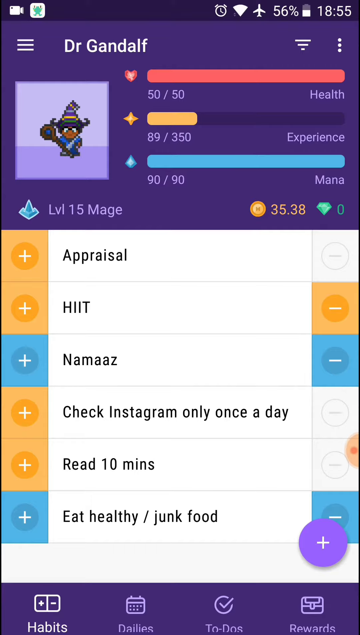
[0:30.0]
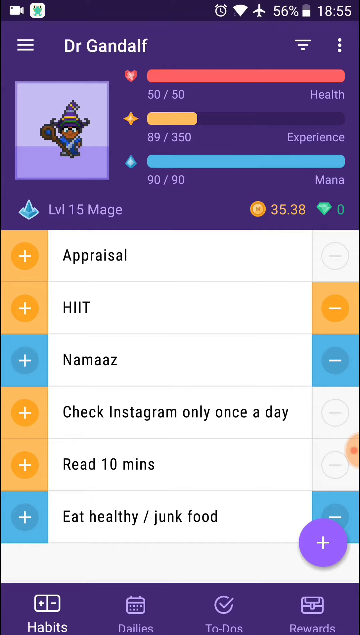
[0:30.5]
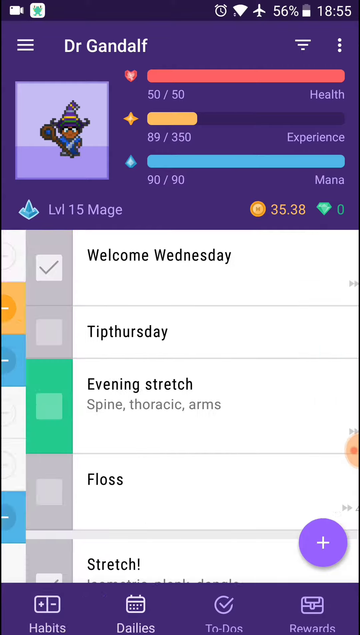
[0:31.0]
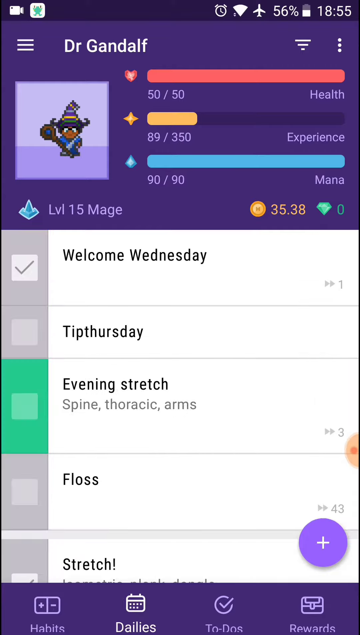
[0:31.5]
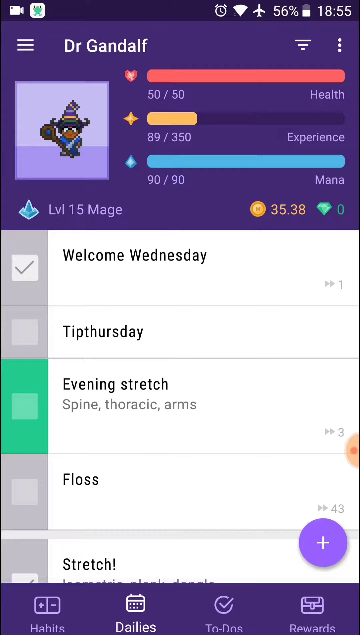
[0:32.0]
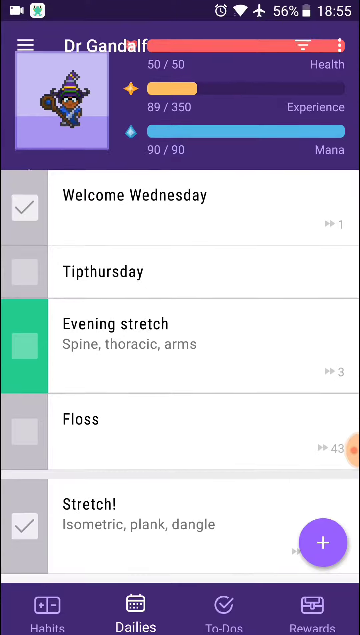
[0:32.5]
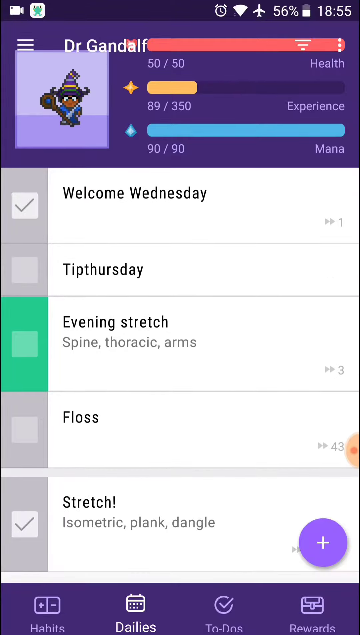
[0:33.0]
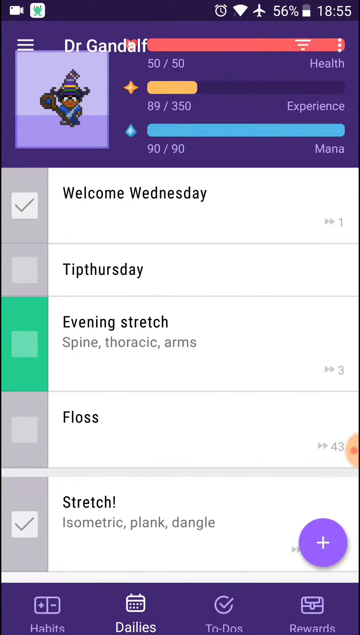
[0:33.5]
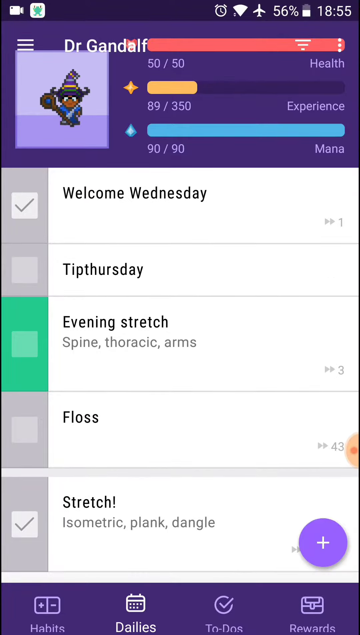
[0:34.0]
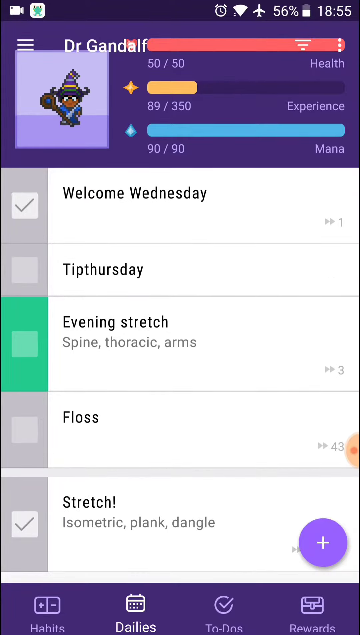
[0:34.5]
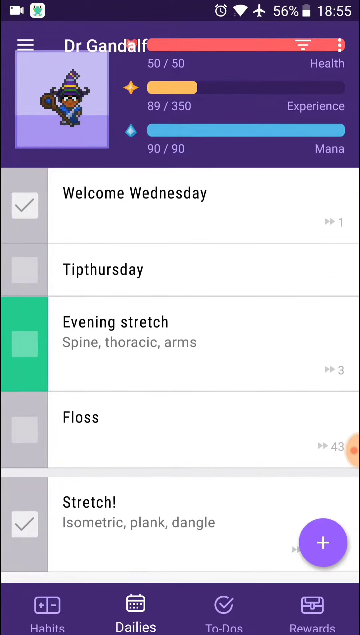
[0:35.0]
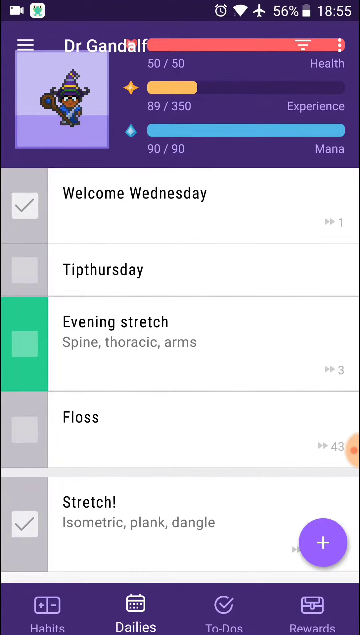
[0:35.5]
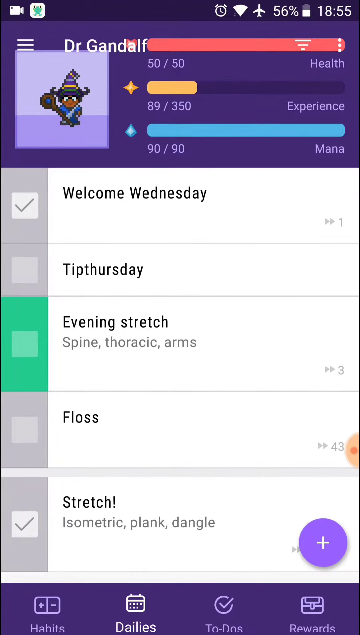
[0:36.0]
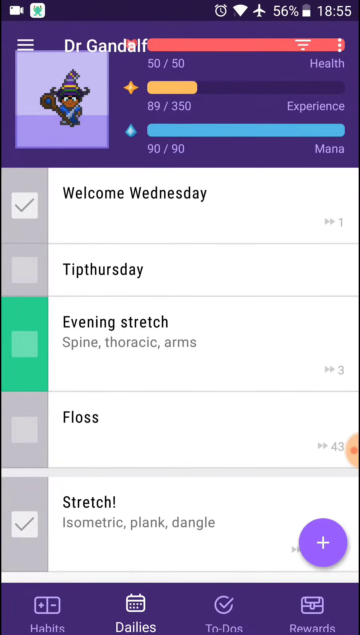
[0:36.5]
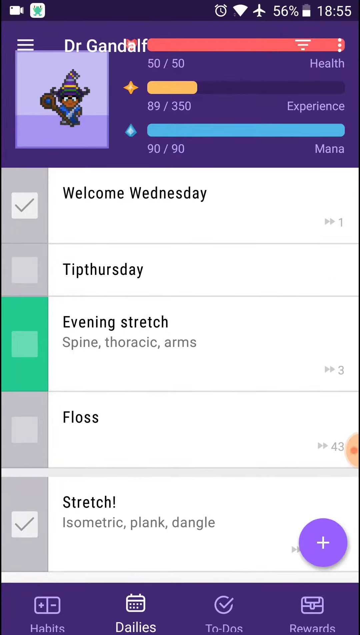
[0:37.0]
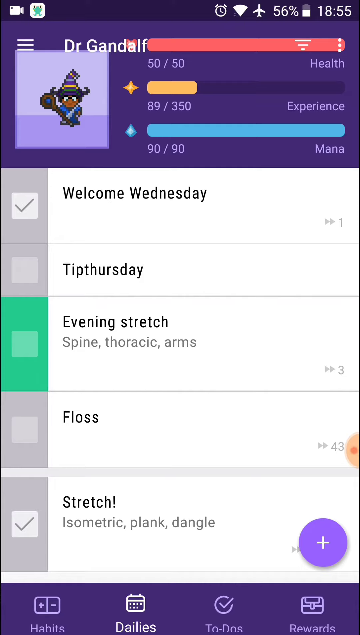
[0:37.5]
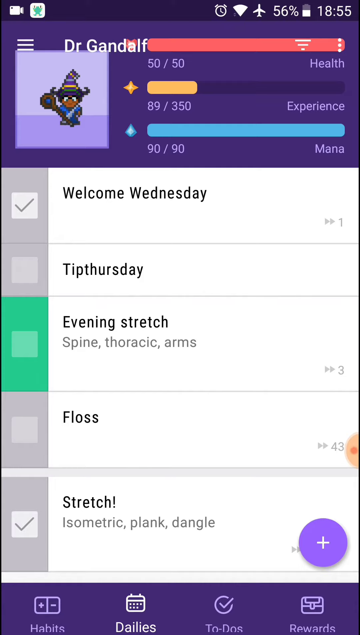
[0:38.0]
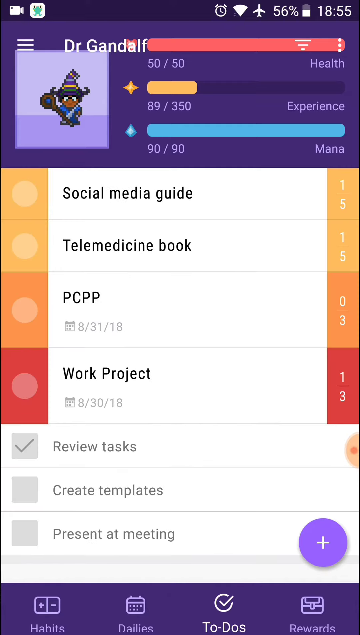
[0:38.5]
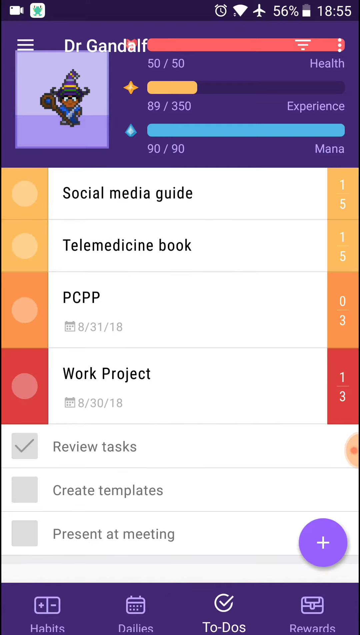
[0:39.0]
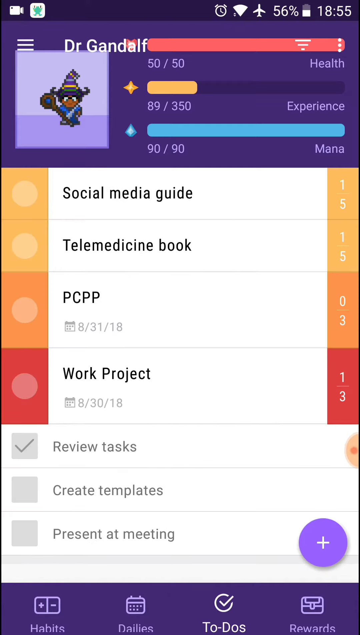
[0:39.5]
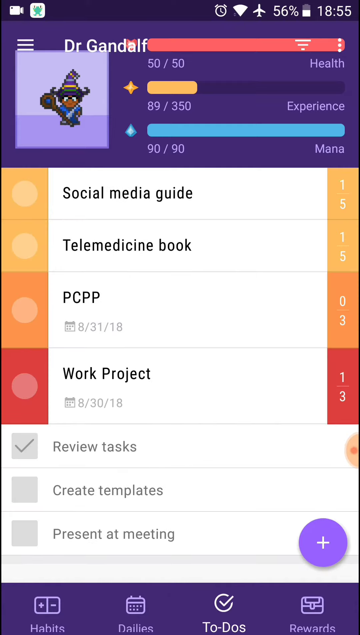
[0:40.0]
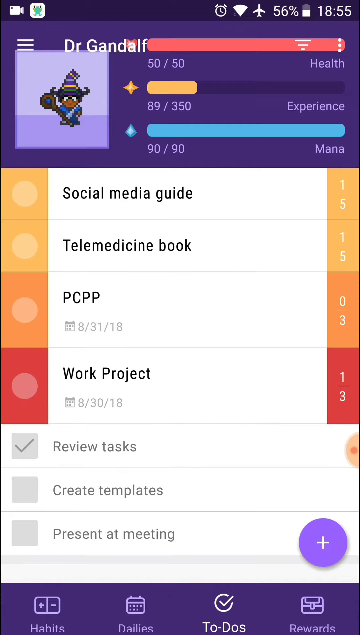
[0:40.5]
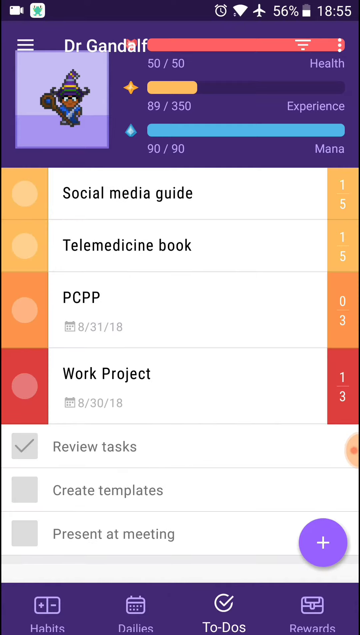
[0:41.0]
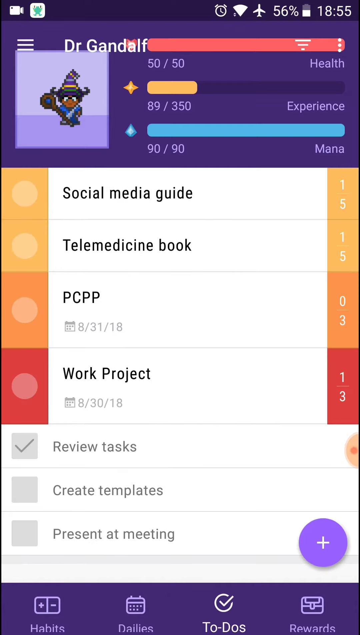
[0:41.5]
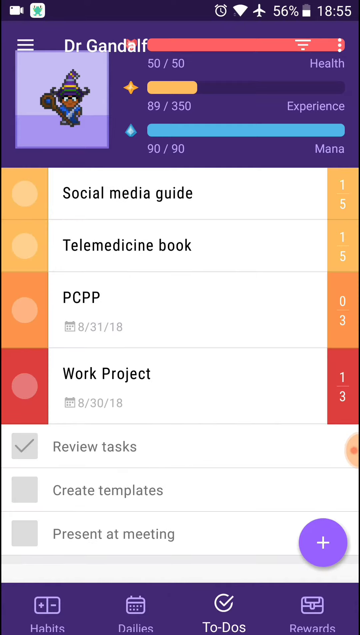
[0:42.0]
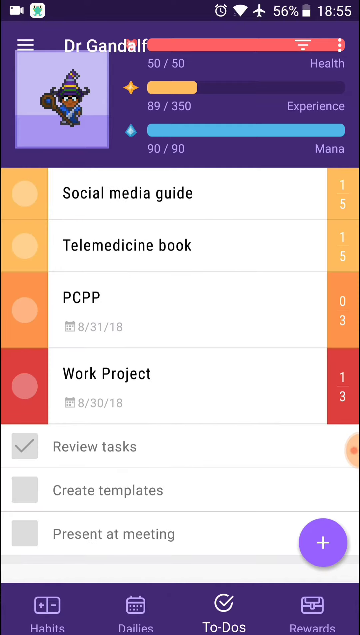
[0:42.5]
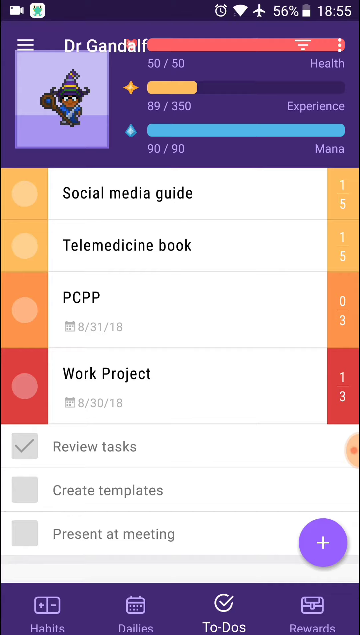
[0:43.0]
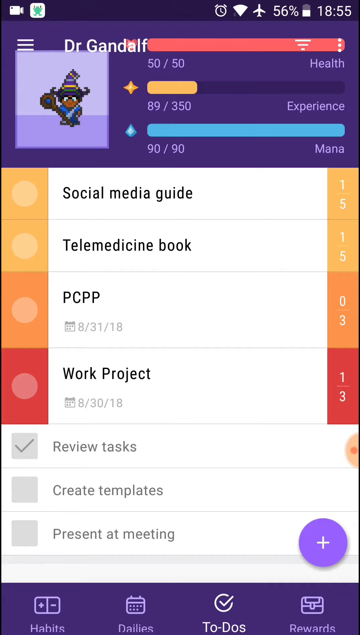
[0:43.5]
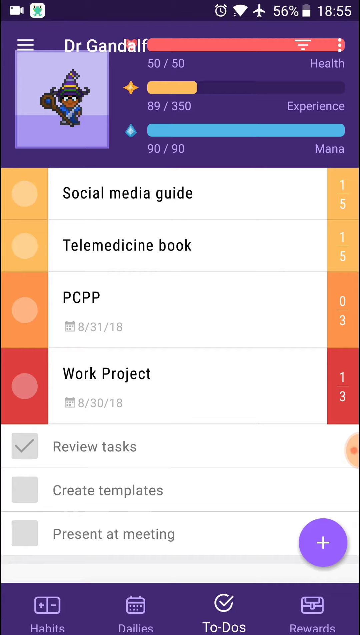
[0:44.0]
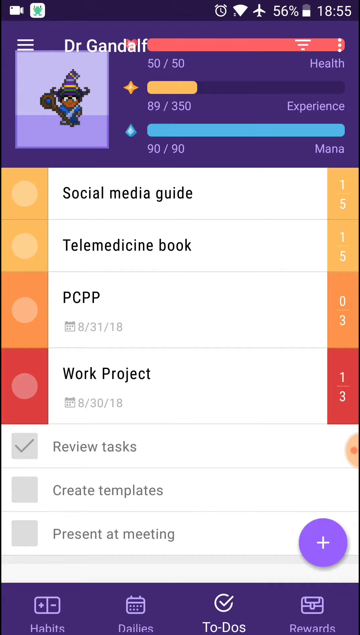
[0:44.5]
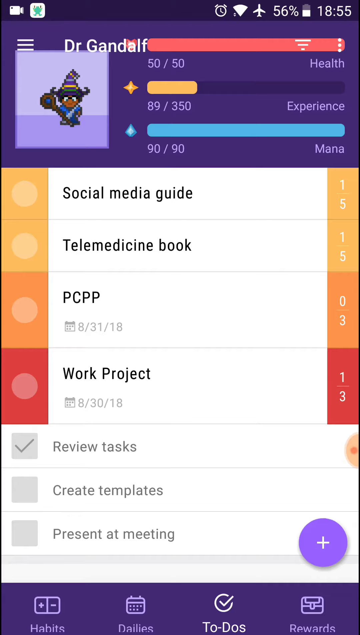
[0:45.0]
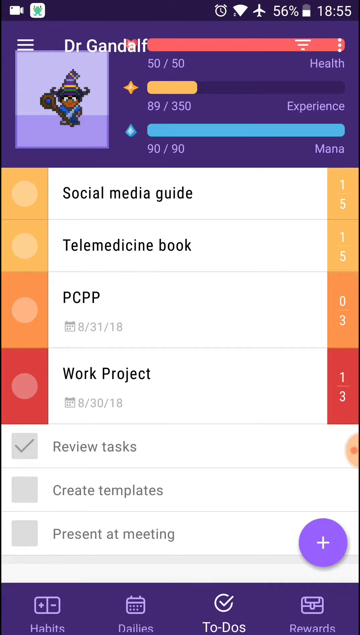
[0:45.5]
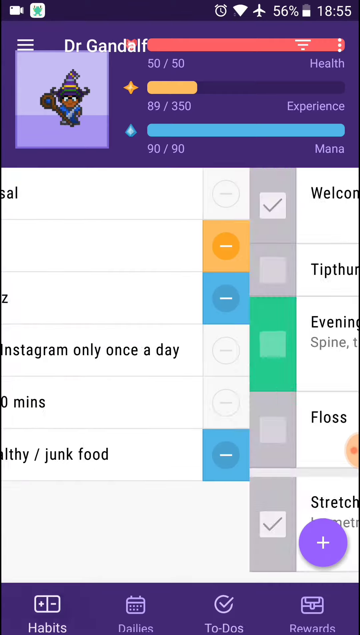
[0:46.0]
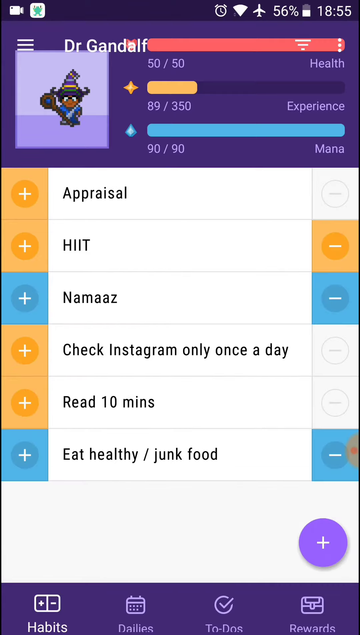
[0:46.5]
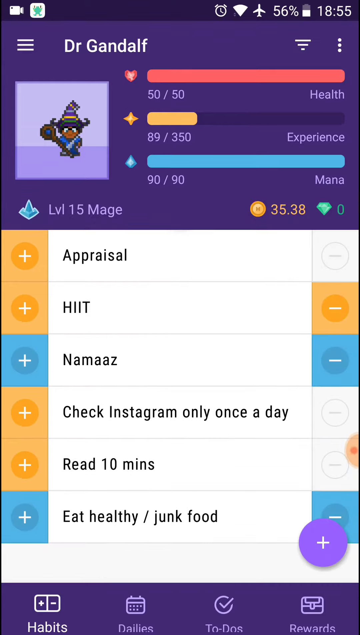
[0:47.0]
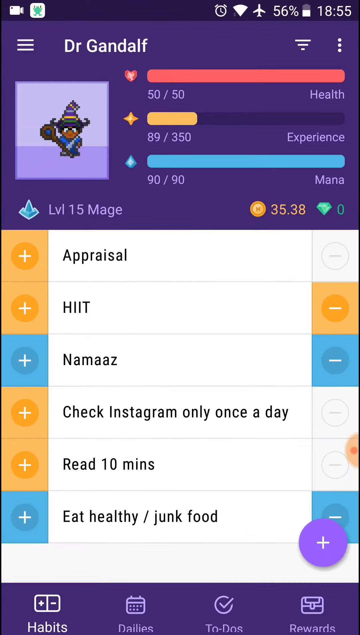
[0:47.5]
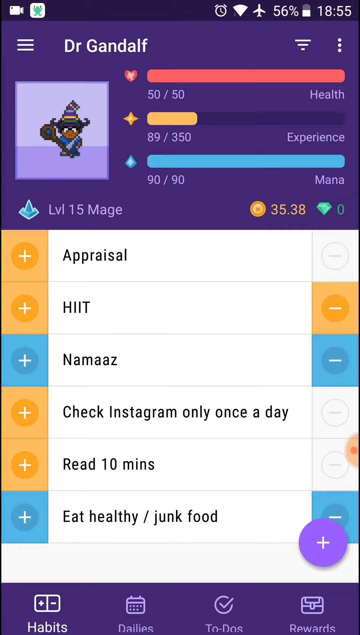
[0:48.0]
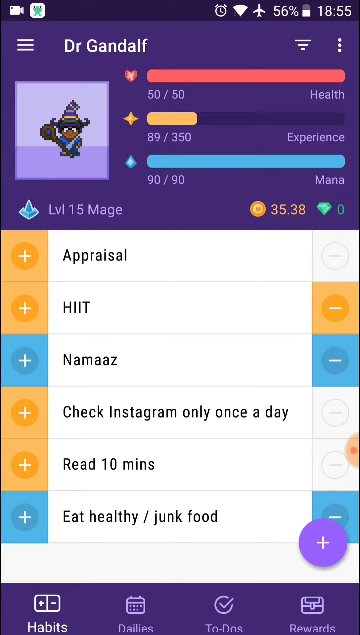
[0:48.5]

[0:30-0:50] The list at the bottom changes as the user scrolls through it, showing five items. From the top they read "Welcome Wednesday", "Tip Thursday", "Evening Stretch" in the center, "Floss" toward the bottom, and "Stretch" at the very bottom. Another list on top reads "Social Media Guide", then "Telemedicine Book", "PCPP" and "Work Project". There are three check marks at the bottom, one of them checked off, reading "Review Task". The user then reverts to the original screen showing a list of things to do, switches to the list with stretch, floss and tip Thursday, switches again to the list with social media guide, PCPP and work project, and then goes back to the original list, which reads "appraisal HIIT Check Instagram only once a day, read 10 minutes, eat healthy, junk food". It seems to be a list of personal goals.